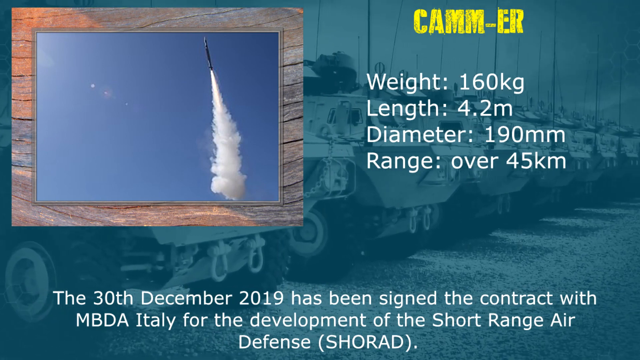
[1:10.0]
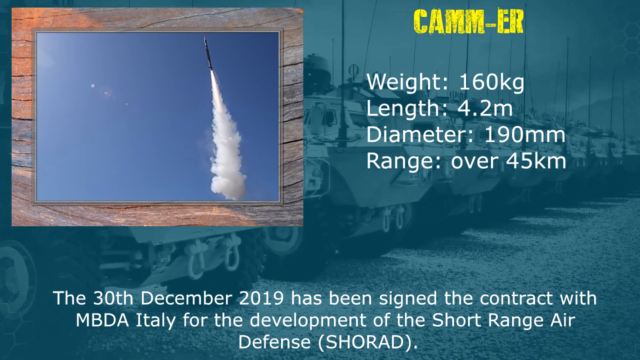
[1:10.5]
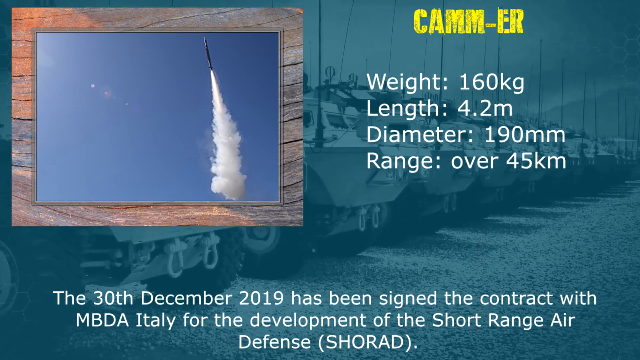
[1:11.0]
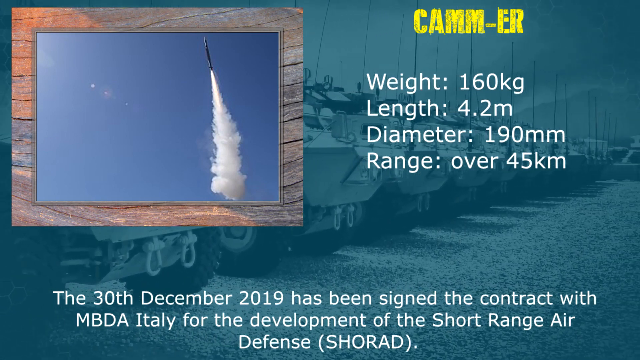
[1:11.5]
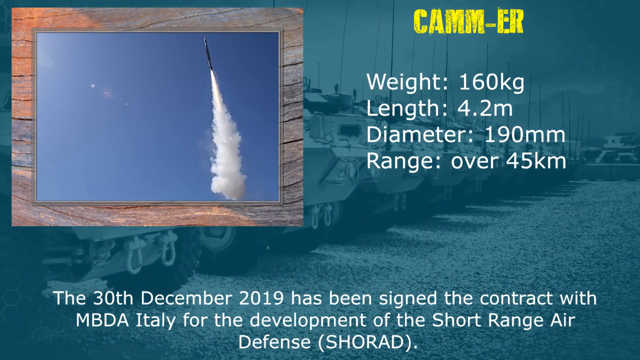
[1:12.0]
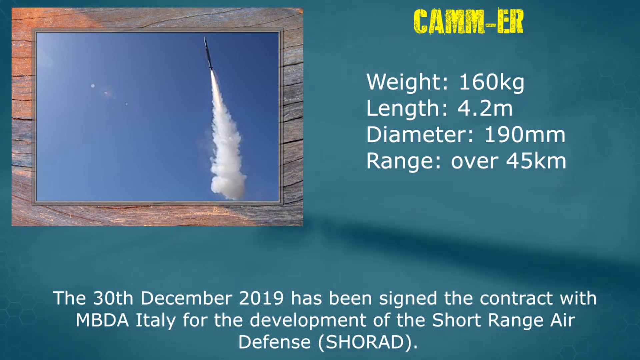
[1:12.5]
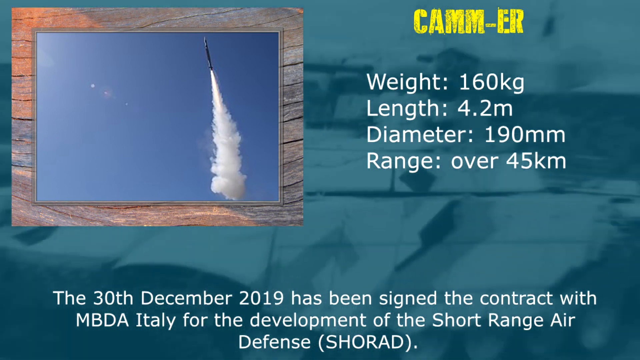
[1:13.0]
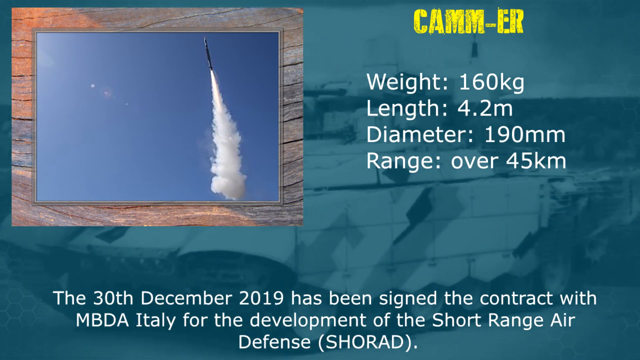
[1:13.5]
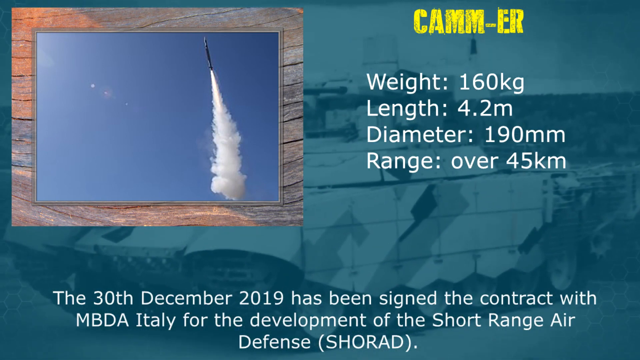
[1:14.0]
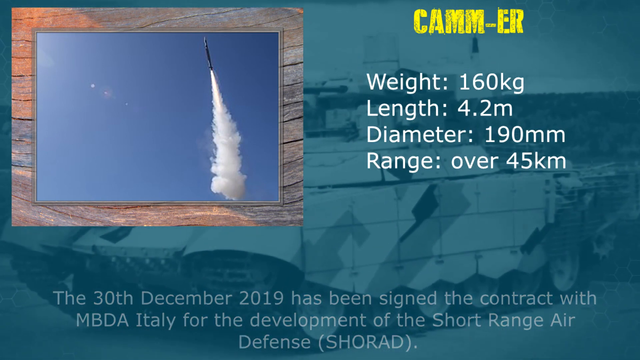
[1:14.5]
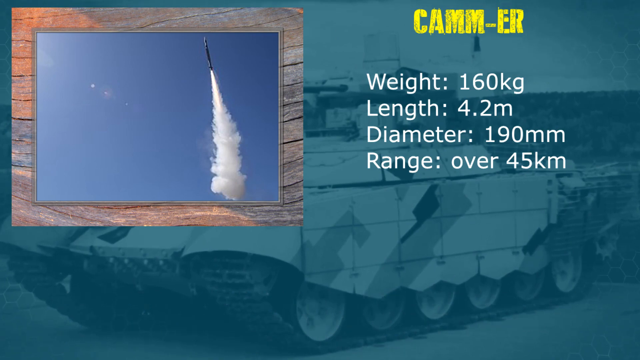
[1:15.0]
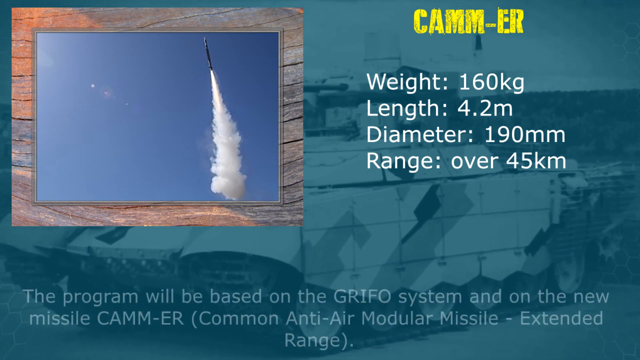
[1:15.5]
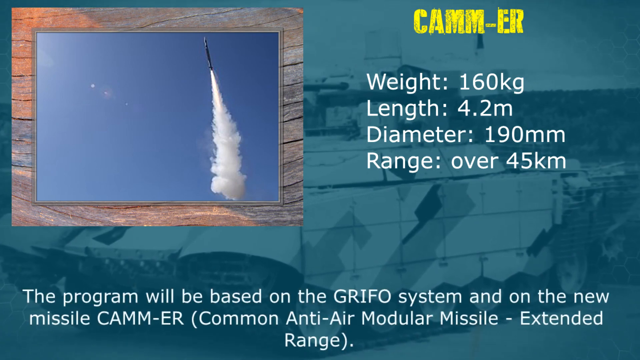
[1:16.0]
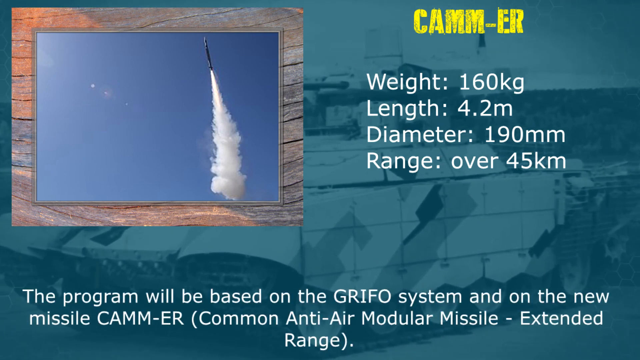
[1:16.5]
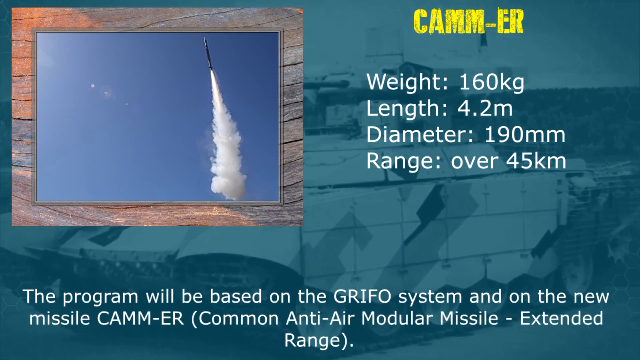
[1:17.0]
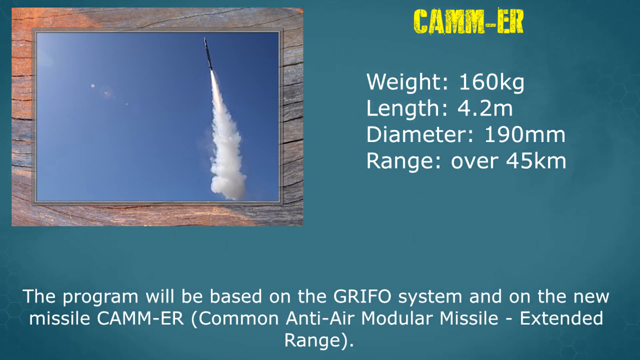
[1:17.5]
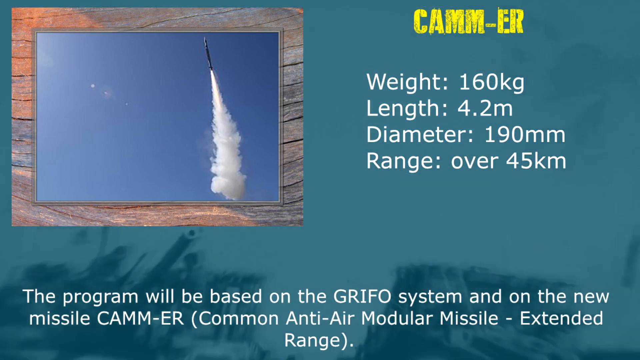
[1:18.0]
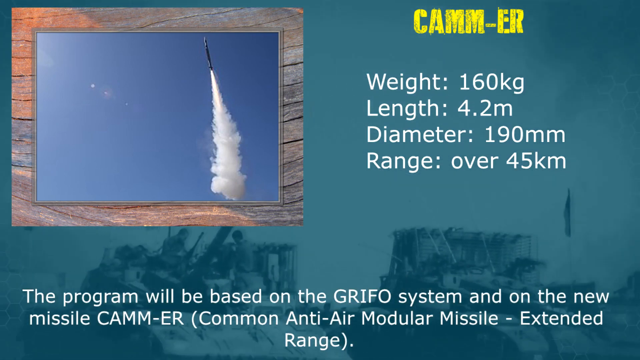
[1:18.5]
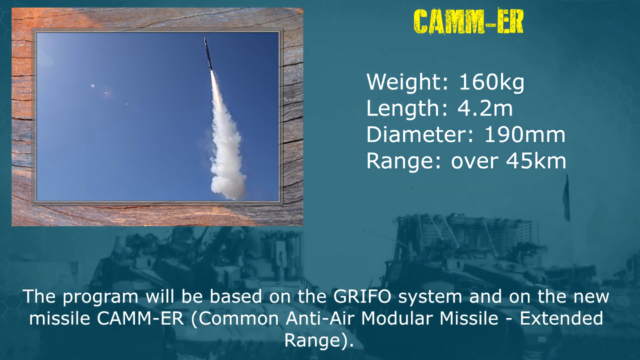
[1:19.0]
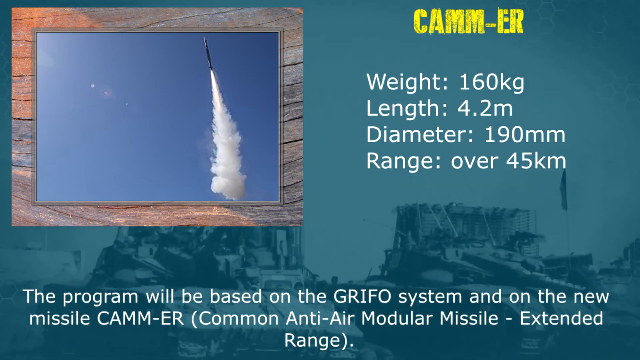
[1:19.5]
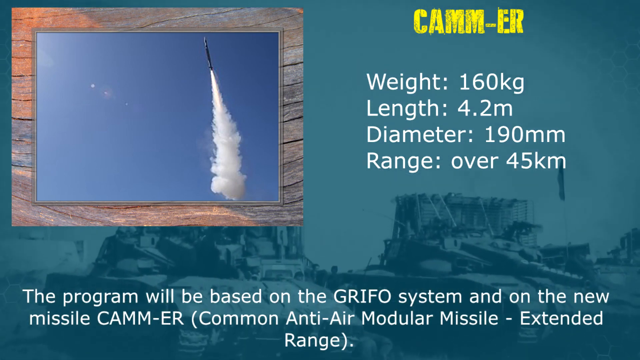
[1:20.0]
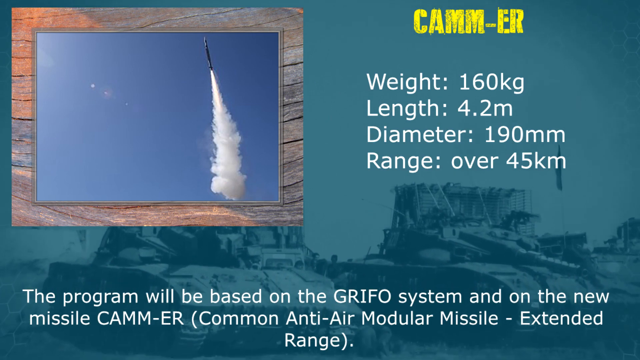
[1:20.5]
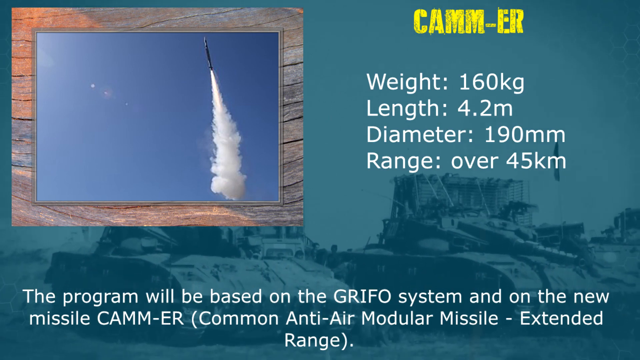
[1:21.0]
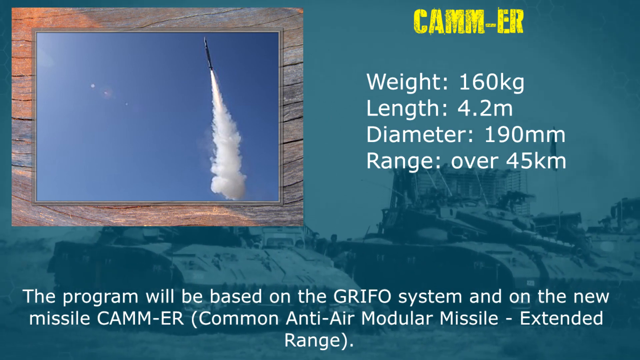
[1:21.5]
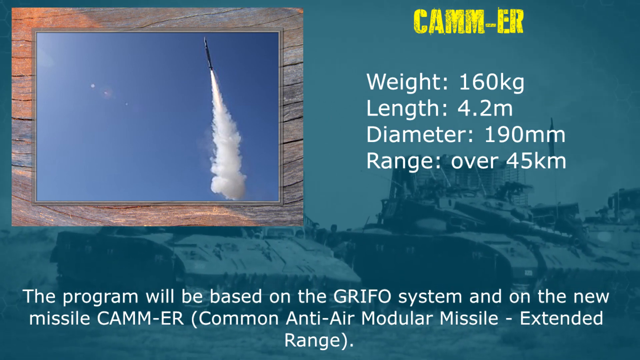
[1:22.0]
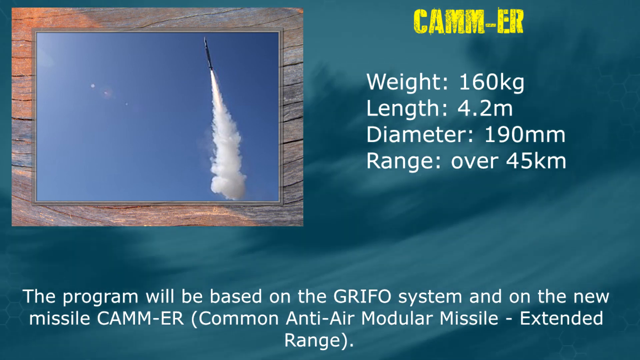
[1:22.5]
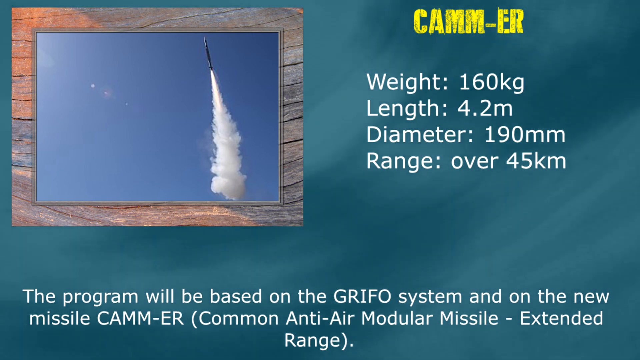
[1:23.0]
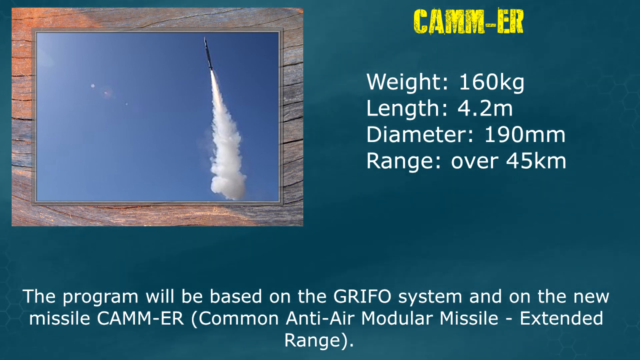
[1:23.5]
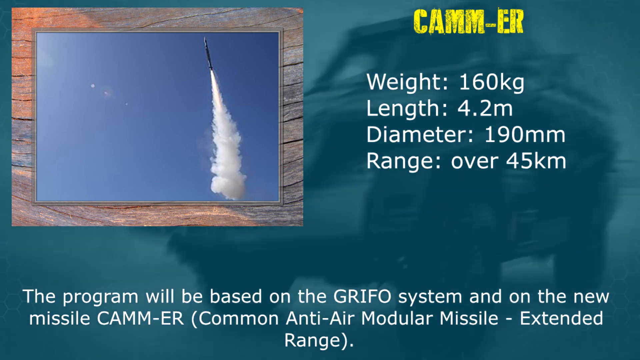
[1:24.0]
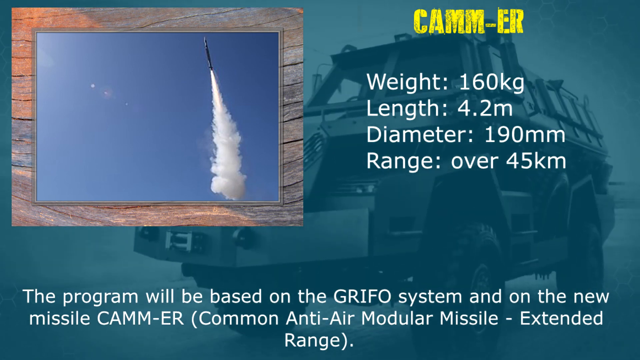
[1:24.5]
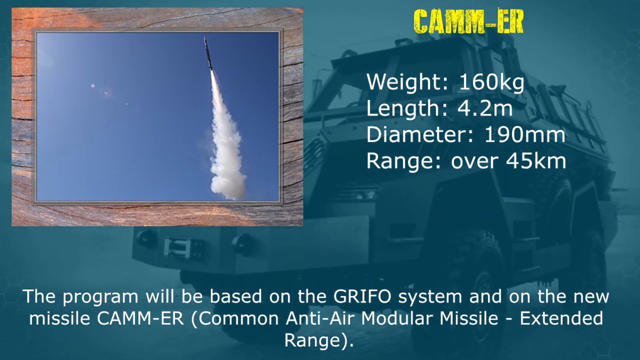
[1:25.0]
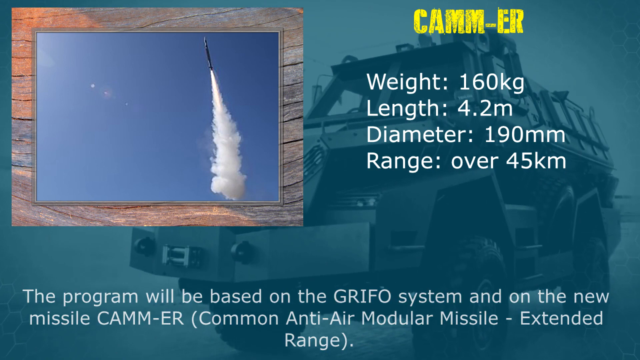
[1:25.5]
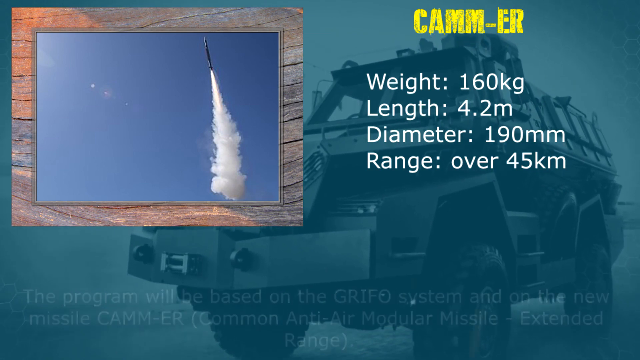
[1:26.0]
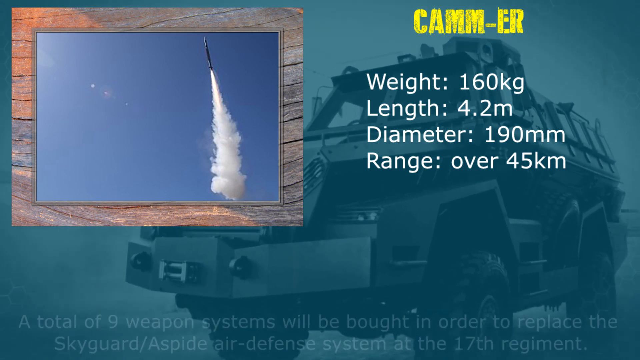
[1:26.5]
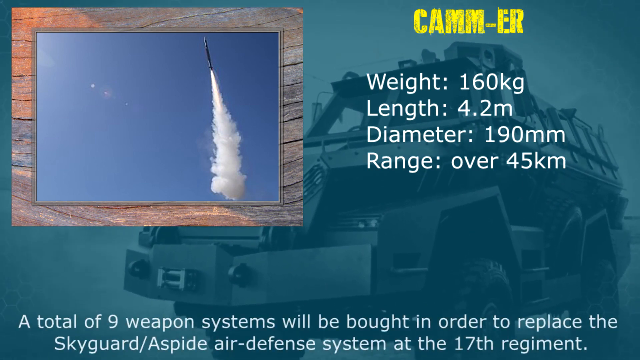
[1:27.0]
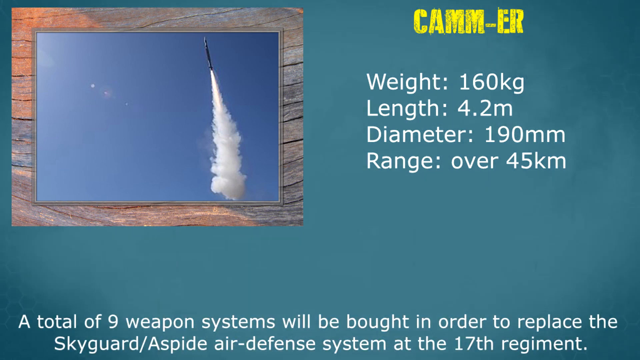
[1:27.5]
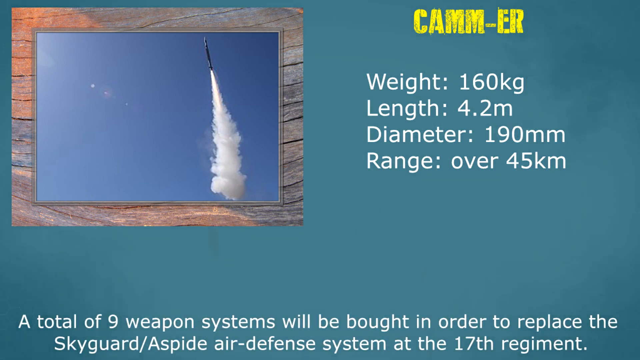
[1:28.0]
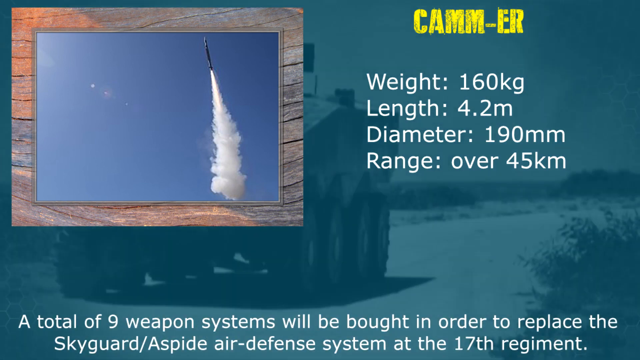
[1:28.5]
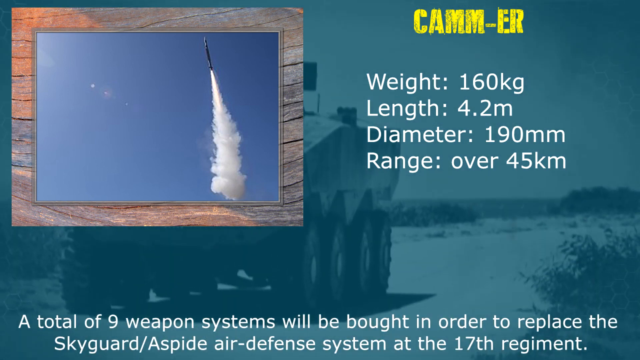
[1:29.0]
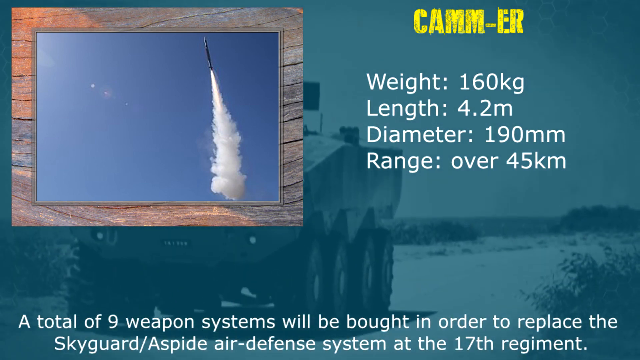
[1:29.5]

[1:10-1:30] On a dark blue background with images of tanks and helicopters, yellow writing at the top says "CAM EAR". In a square in the upper left of the screen is what looks to be a rocket that has taken off, with smoke coming from its bottom. Below "CAM EAR", weight, length, diameter and range are listed, each with additional information. The background slowly changes through different types of military equipment, mainly different types of tanks. White writing at the bottom says "the 30th December 2019 has been signed the contract with MBDA Italy for the development of the short range air".